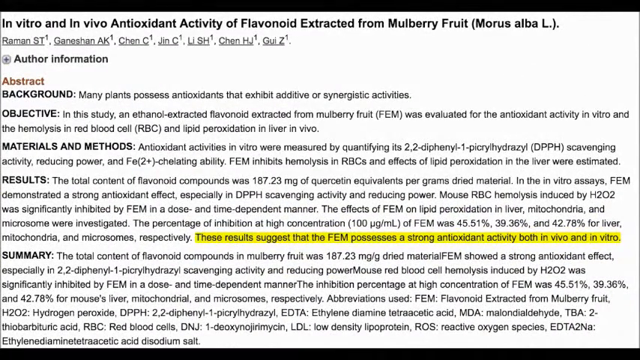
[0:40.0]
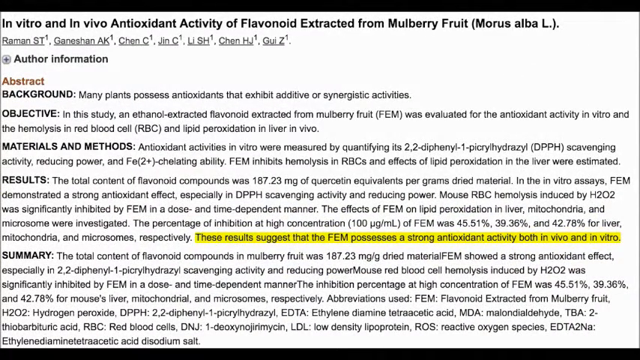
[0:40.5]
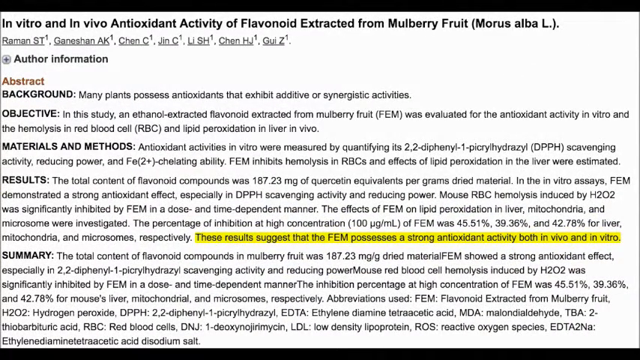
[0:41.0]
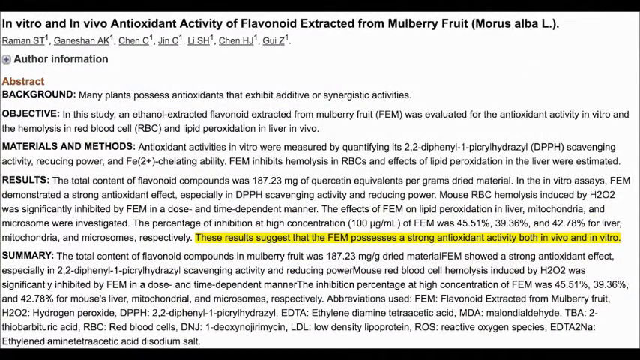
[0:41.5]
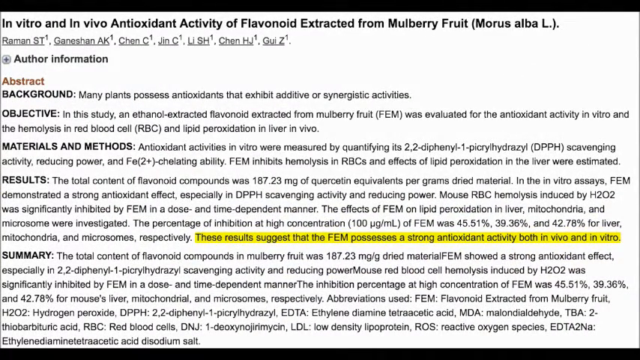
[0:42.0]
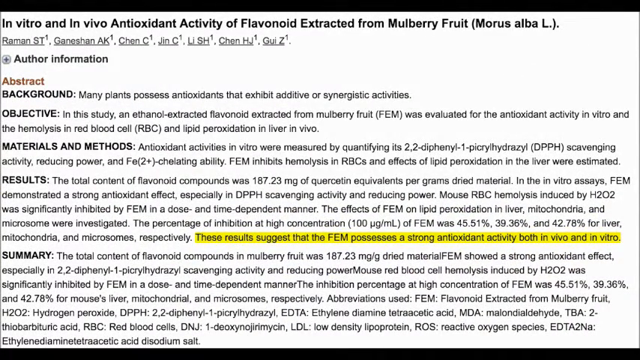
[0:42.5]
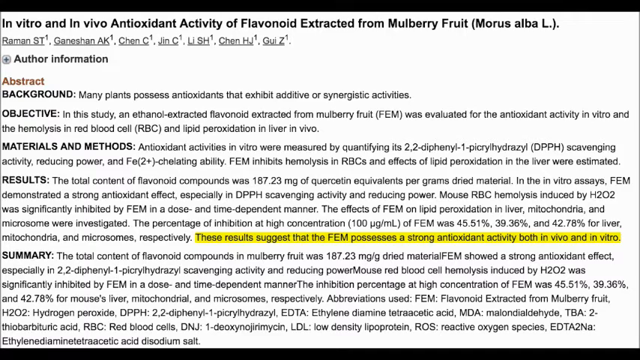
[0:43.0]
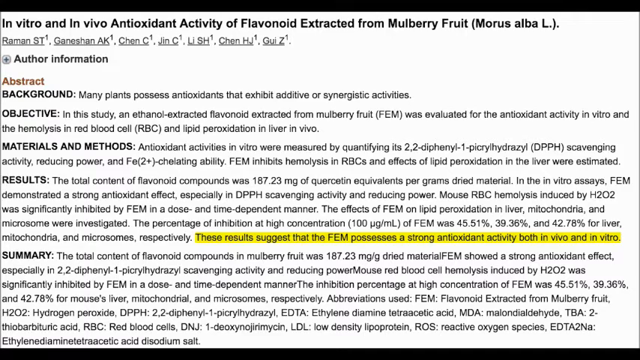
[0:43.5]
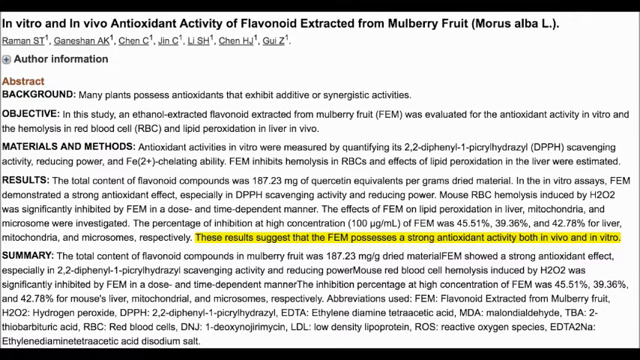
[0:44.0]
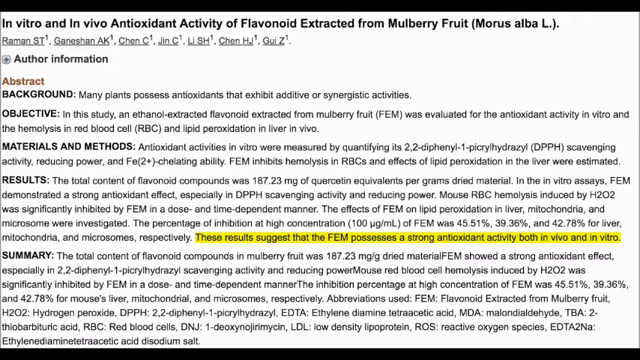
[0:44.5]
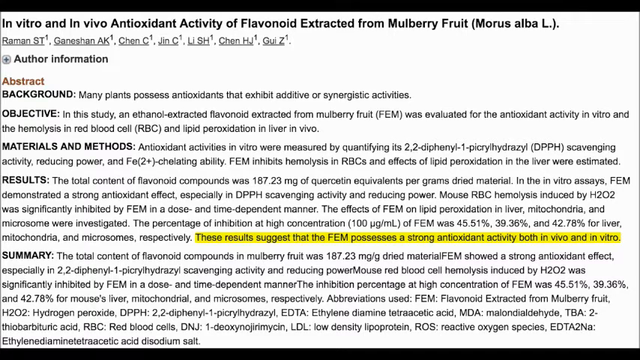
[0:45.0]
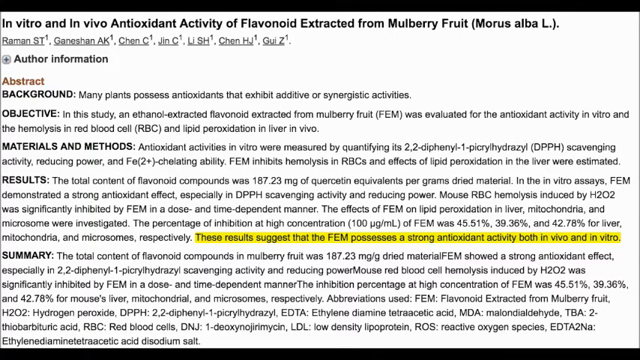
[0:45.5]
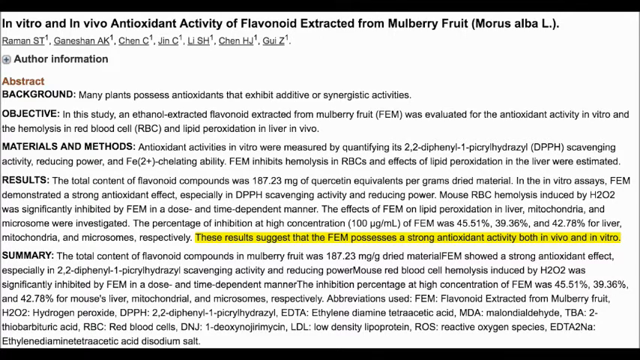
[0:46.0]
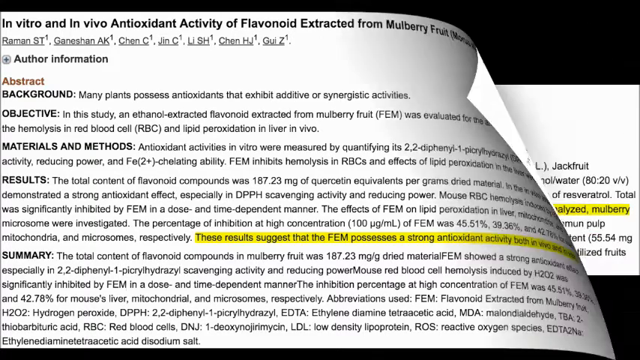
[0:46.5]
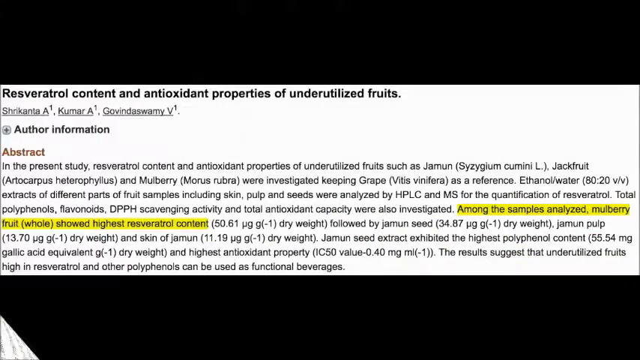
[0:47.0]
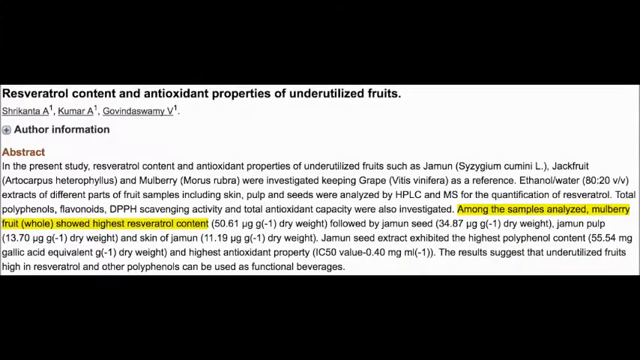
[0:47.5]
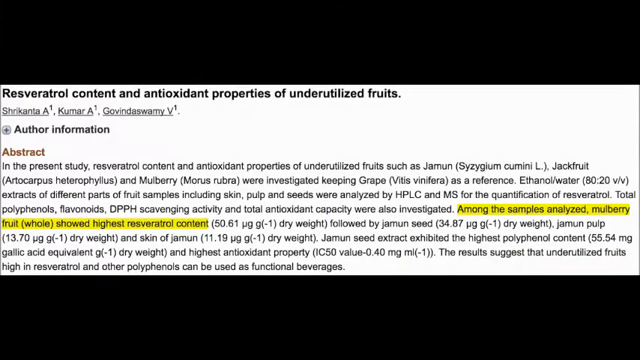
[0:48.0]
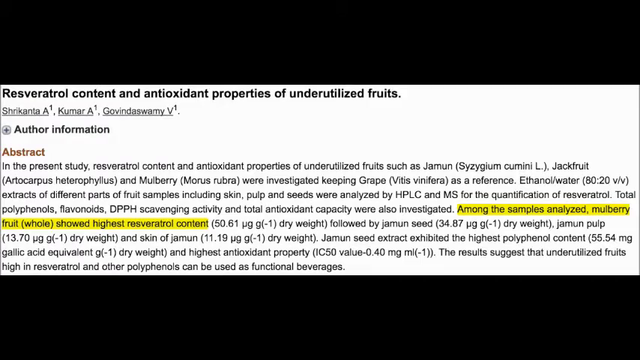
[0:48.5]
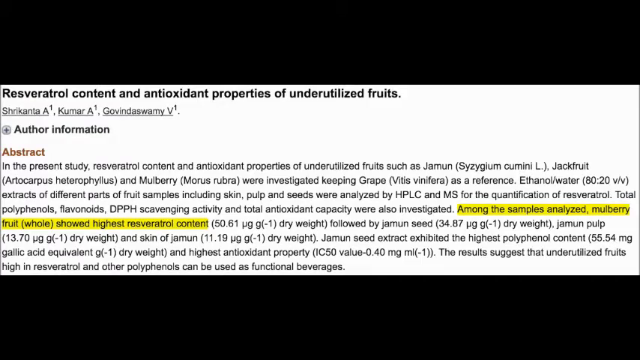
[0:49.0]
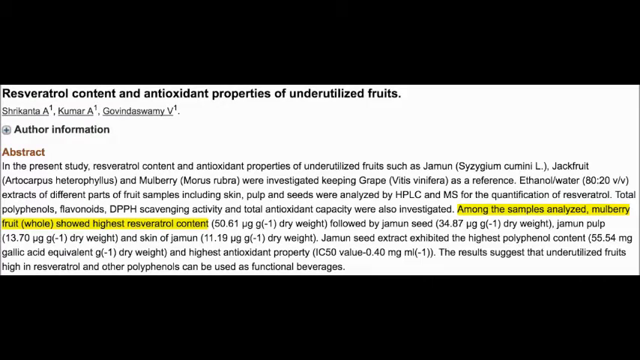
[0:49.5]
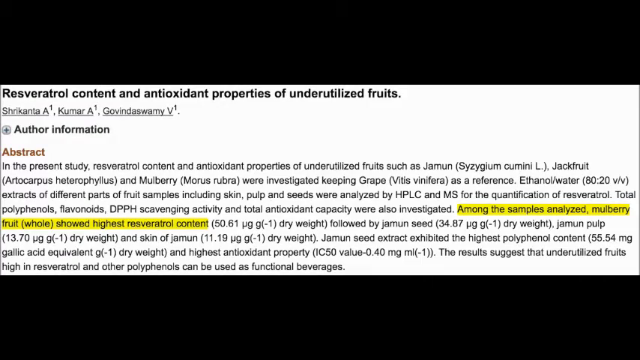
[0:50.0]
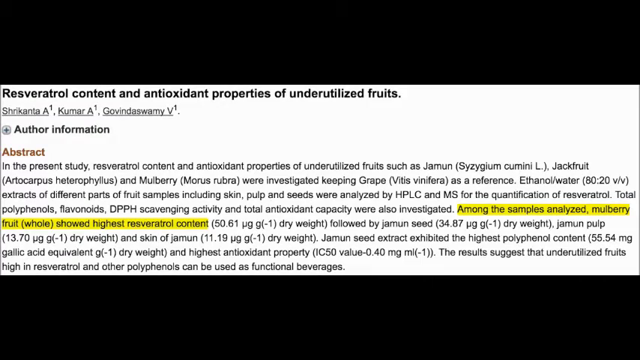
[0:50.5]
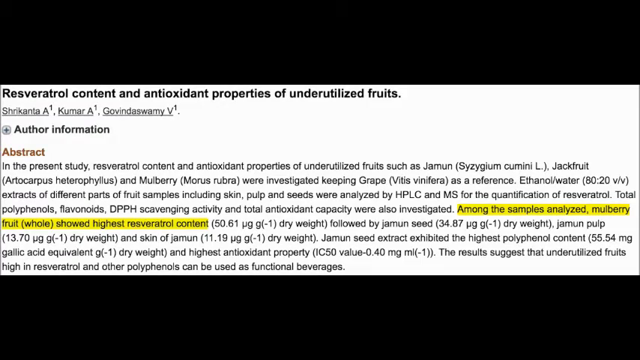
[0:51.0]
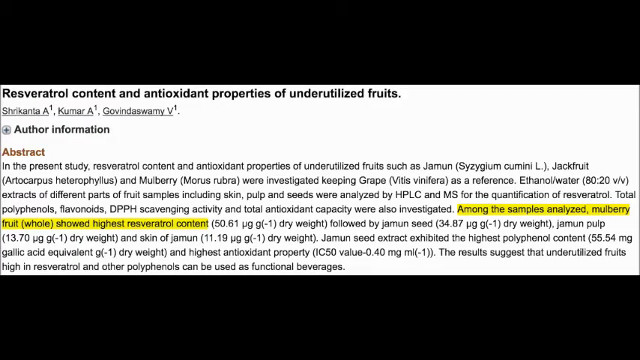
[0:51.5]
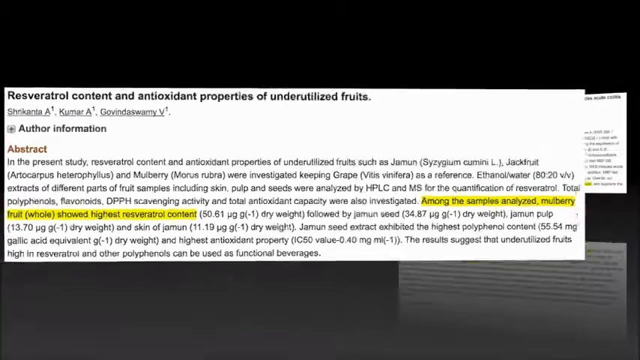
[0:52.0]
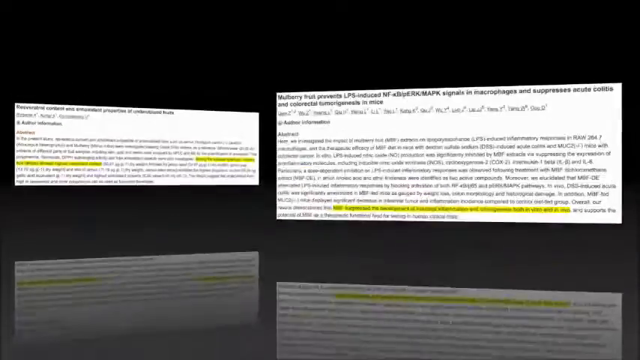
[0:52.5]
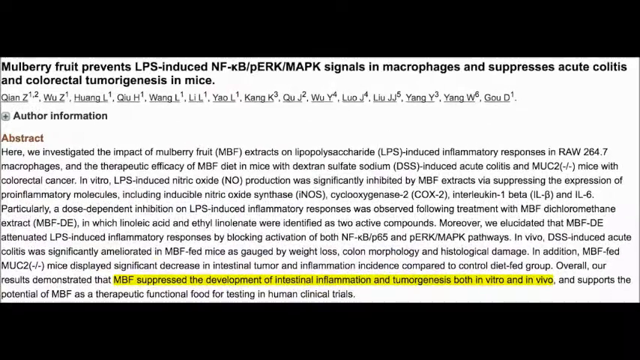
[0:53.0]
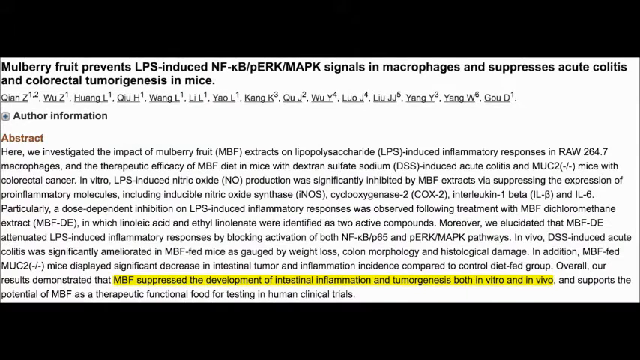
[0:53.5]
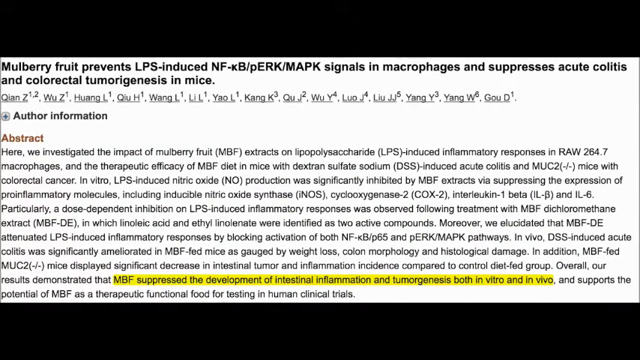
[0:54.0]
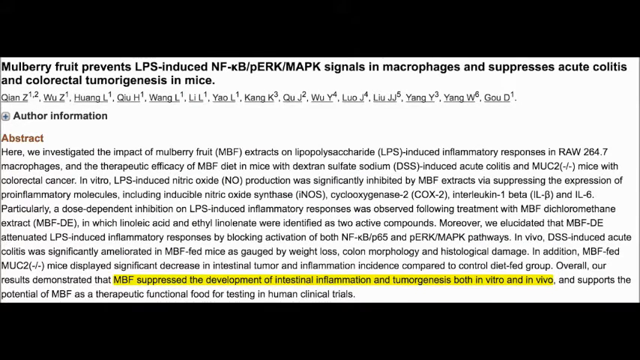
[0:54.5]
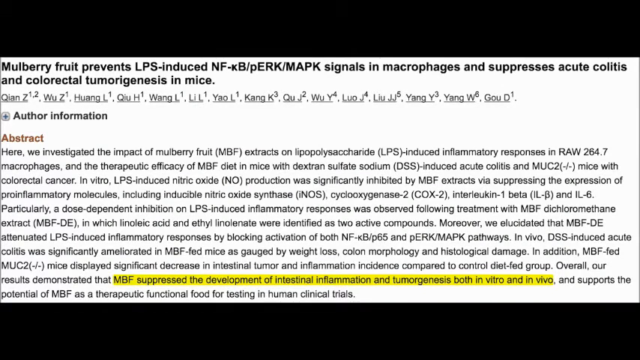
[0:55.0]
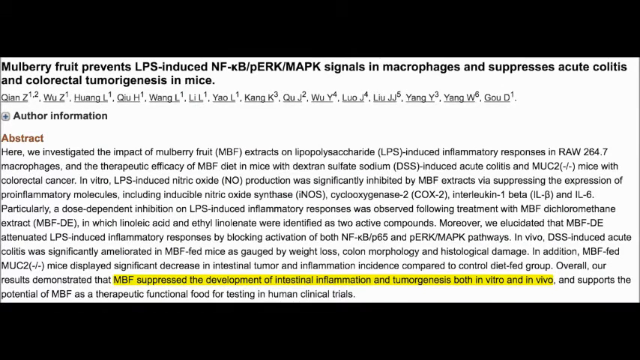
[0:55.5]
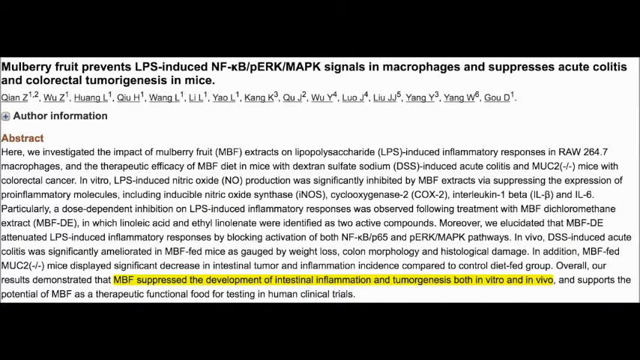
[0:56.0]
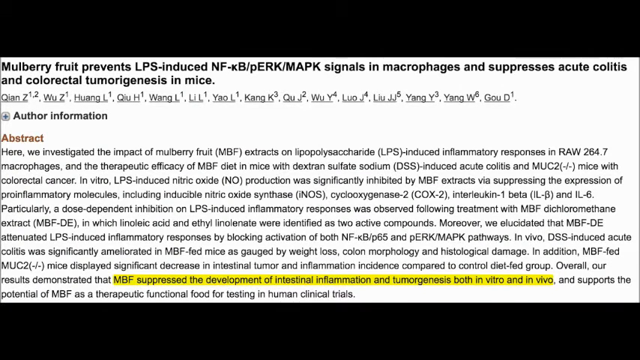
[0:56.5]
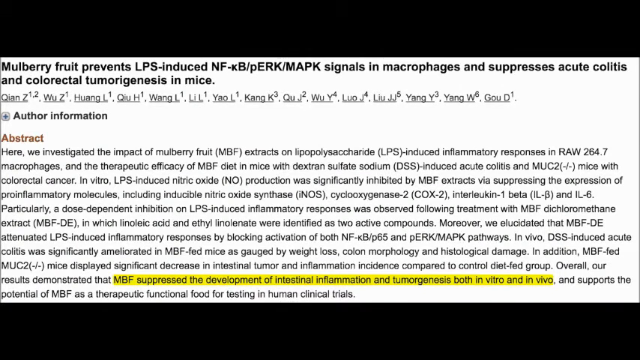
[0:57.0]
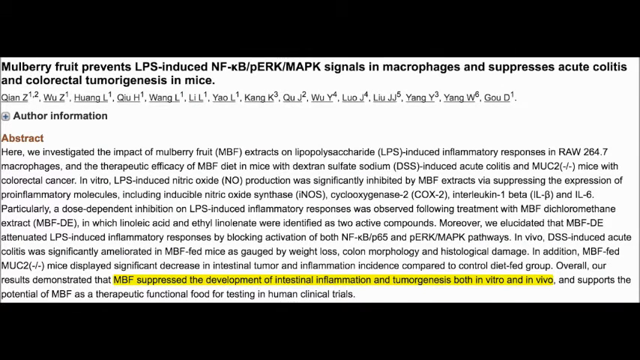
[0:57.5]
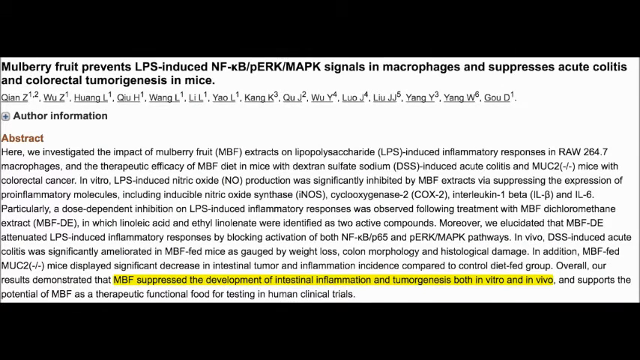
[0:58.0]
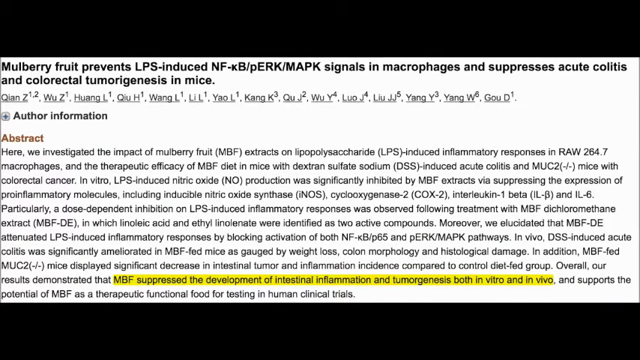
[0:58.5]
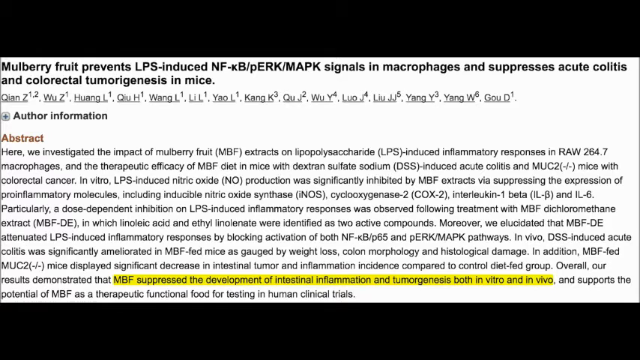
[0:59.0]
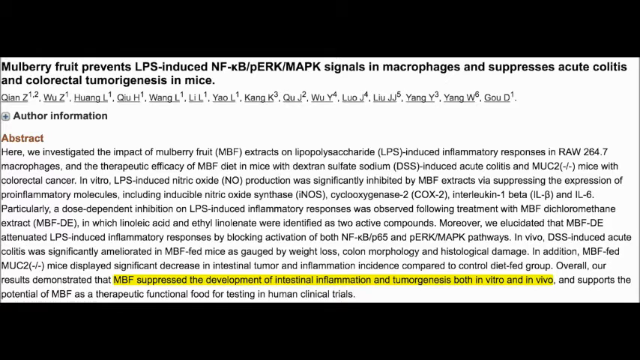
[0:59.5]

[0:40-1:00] A series of scientific journal articles about the mulberry fruit appears. The first is titled "in vitro and in vivo antioxidant activity of flavonoid extracted from mulberry fruit." Its abstract background states "many plants possess antioxidants that exhibit additive or synergistic activities," and the results text highlighted in yellow reads "these results suggest that the FEM possesses a strong antioxidant activity both in vivo and in vitro." The next article is titled "resveratrol content and antioxidant properties of underutilized fruits," indicating that mulberry fruits produce a larger amount of antioxidants than other fruits. The next is titled "mulberry fruits prevent LPS induced NF signals in macrophages and suppresses acute colitis and colorectal tumorogenesis in mice," with yellow highlighted text stating that "MBF suppressed the development of intestinal inflammation and tumorogenesis both in vitro and in vivo."